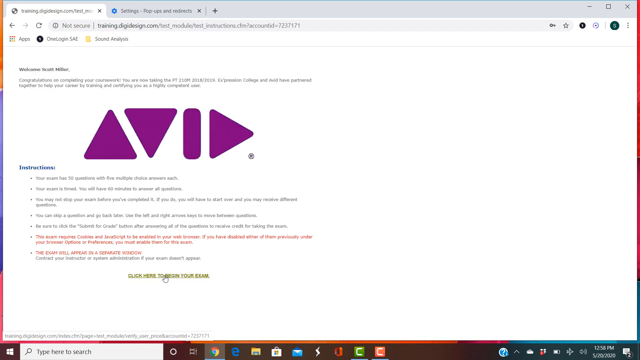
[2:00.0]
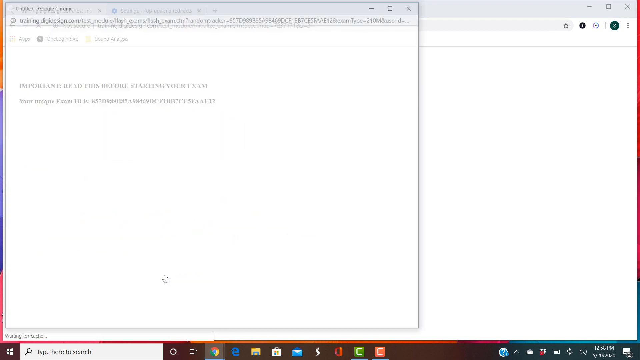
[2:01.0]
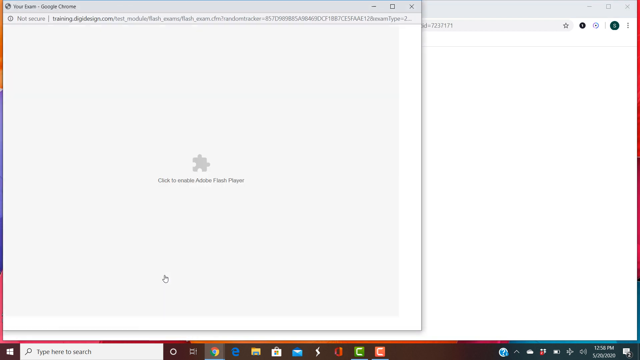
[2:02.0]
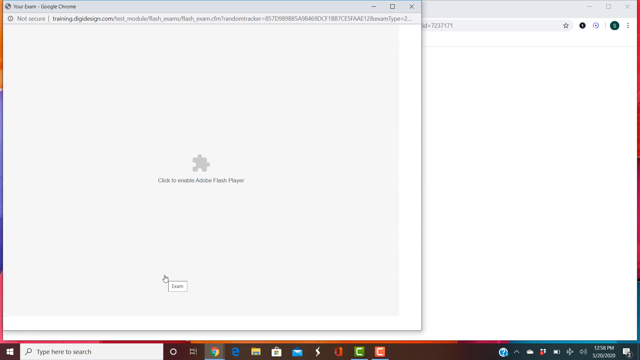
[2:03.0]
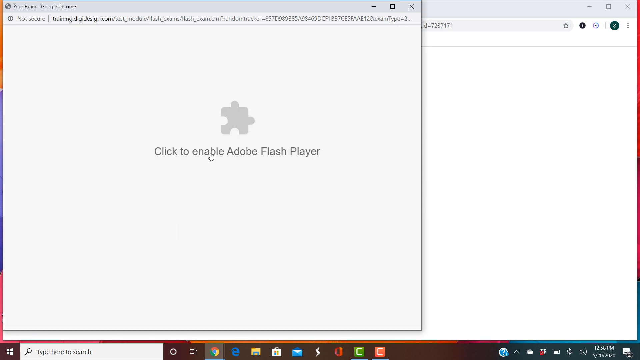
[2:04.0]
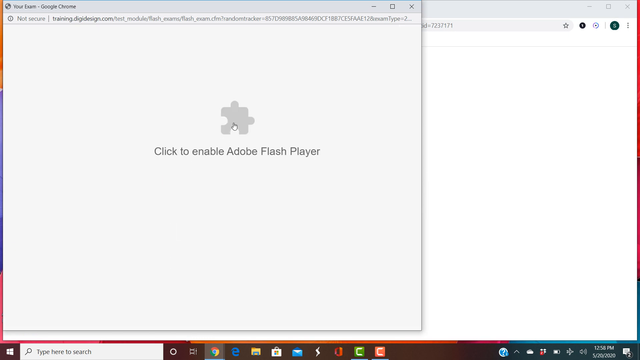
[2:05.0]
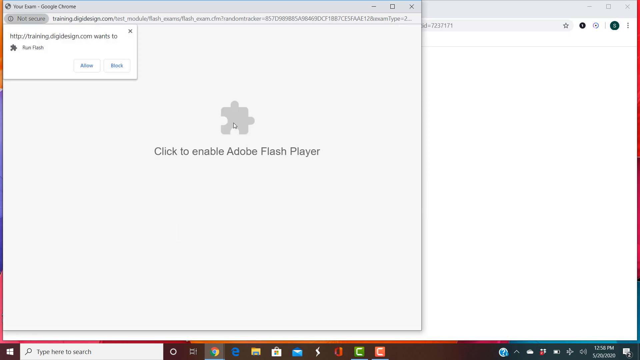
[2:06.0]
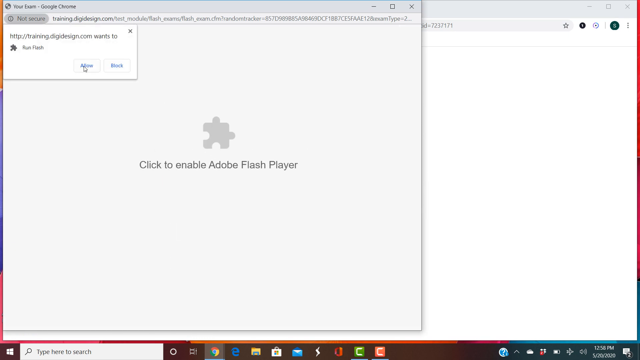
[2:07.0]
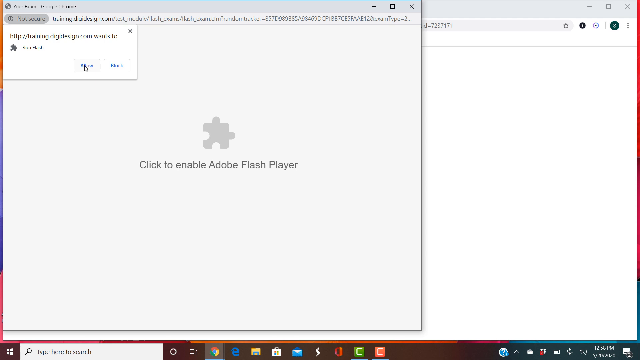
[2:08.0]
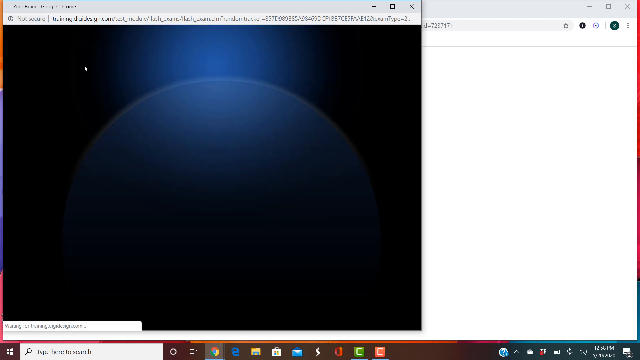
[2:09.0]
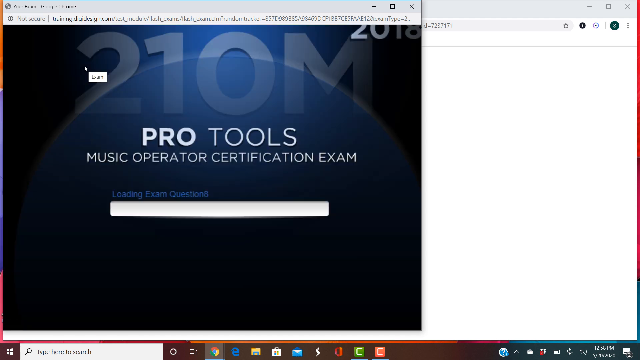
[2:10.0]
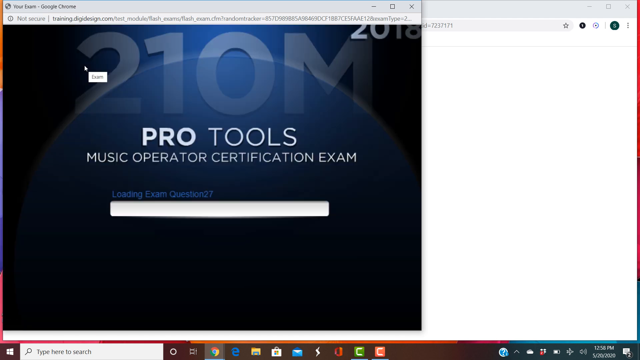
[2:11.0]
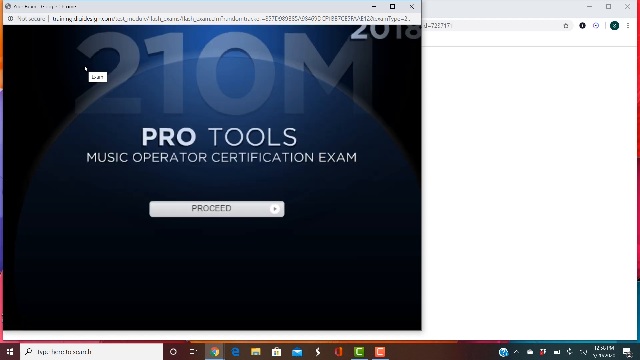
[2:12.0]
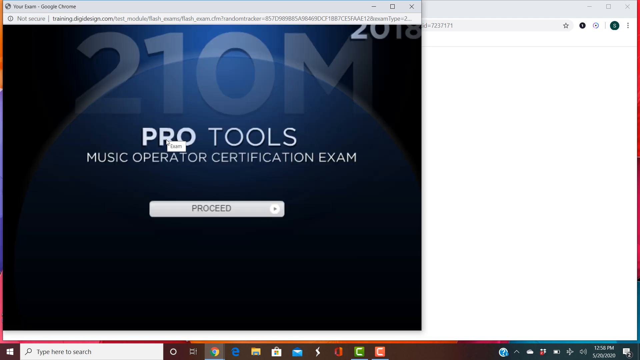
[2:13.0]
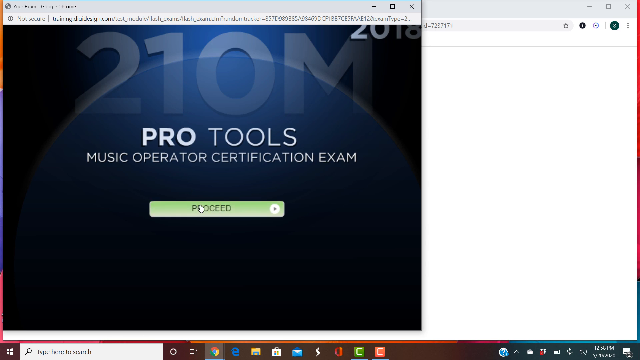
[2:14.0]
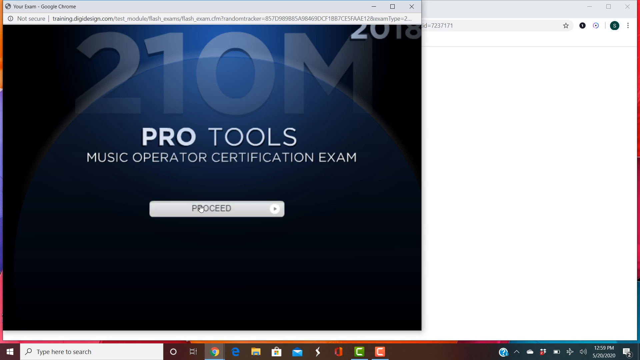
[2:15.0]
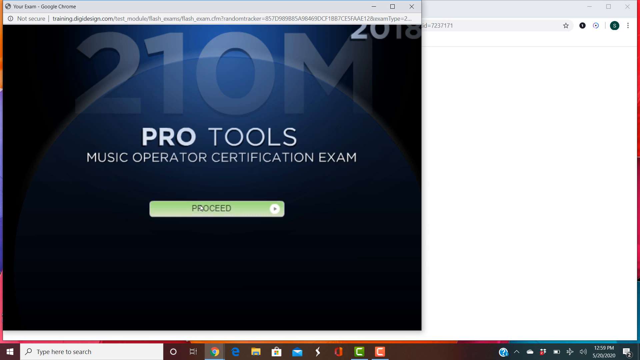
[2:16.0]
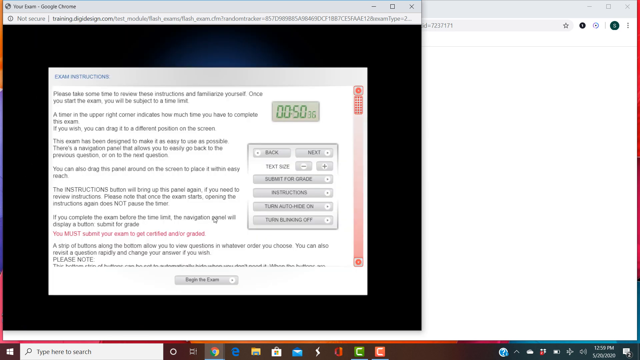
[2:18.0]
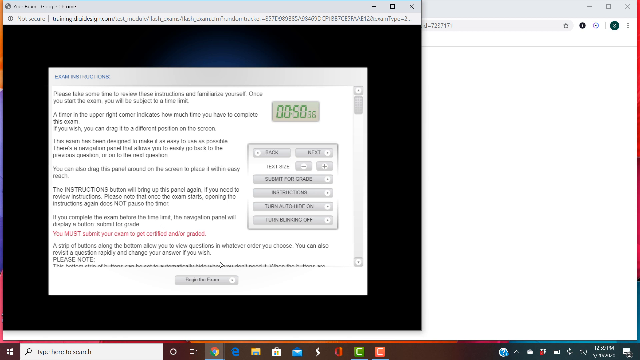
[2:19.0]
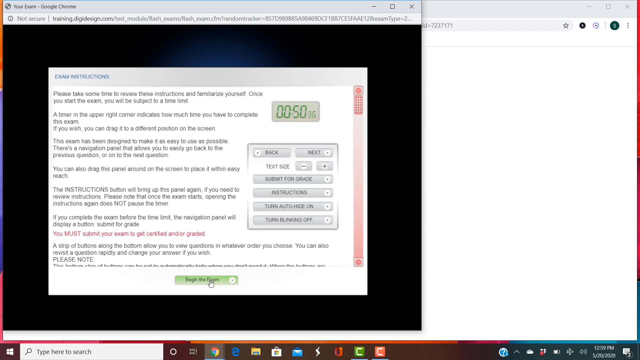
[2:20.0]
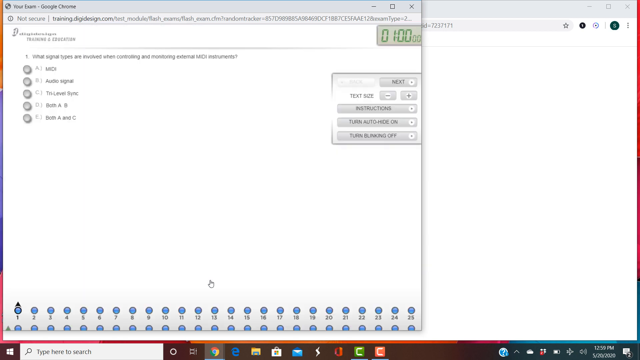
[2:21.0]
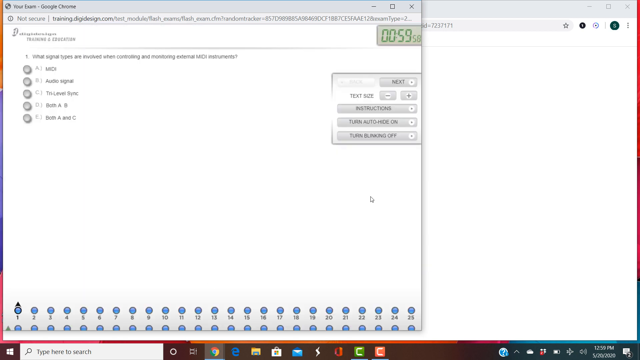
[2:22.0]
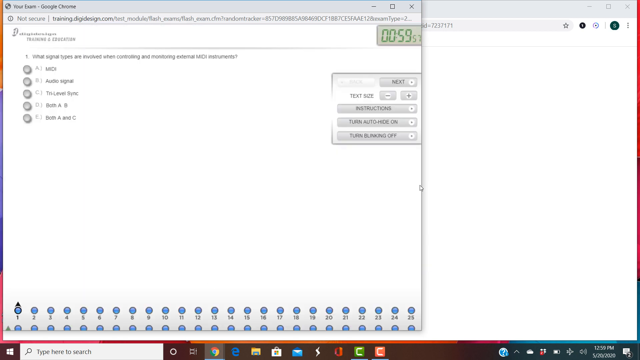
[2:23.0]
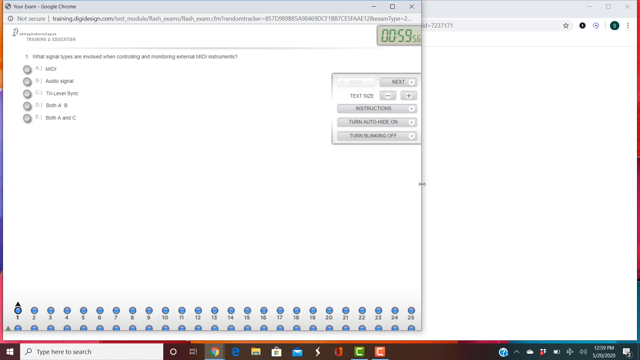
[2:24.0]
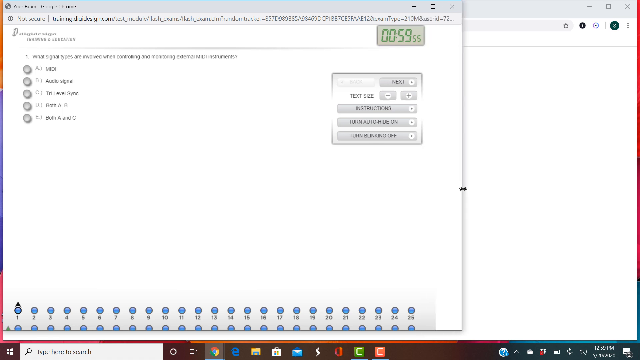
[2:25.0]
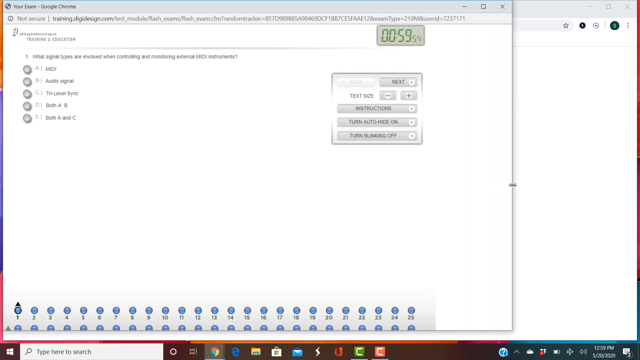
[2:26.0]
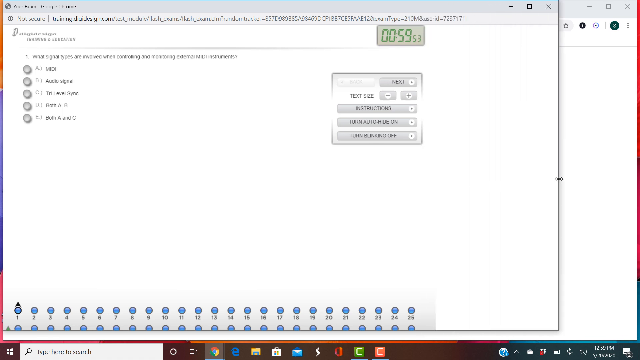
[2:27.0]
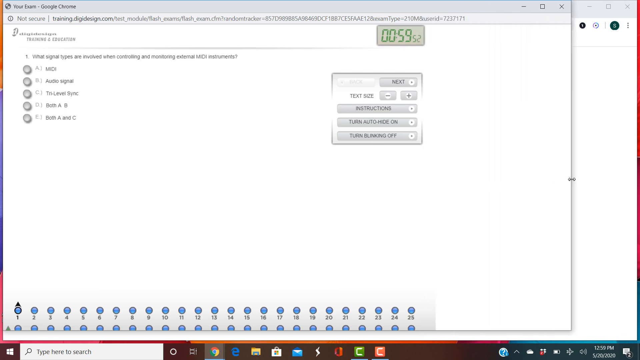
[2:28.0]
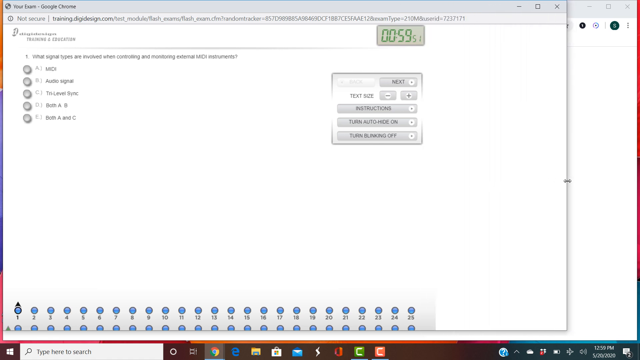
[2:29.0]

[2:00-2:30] A pop-up screen appears from the Google Chrome screen. The mouse first clicks to enable the Flash Player on this pop-up screen, and another pop-up appears with options to allow the Flash or not. The mouse chooses allow. The new screen shows a page that seemingly is a Pro Tools Music Operator Certificate, with "200 million" appearing in the background, almost like a deep watermark. The mouse clicks on proceed and a green bar shows. The next page reads "Exam Instructions", followed by written instructions including "please take some time to review these instructions and familiarize yourself".